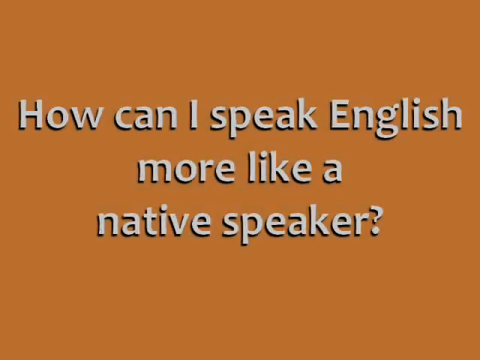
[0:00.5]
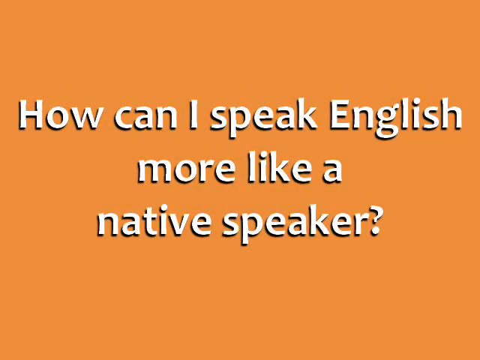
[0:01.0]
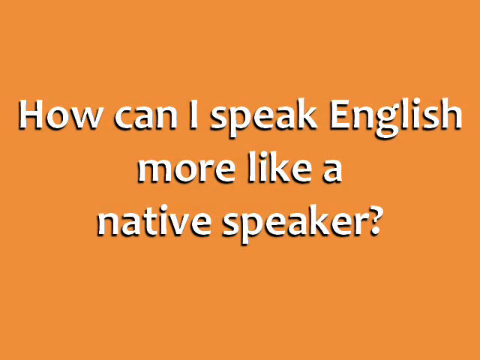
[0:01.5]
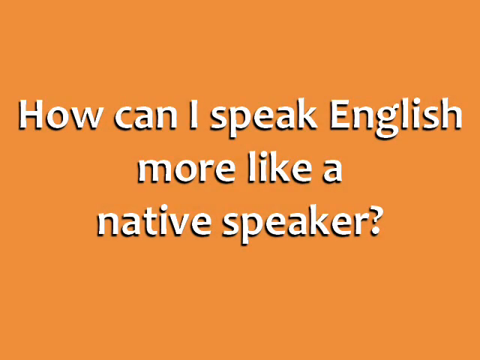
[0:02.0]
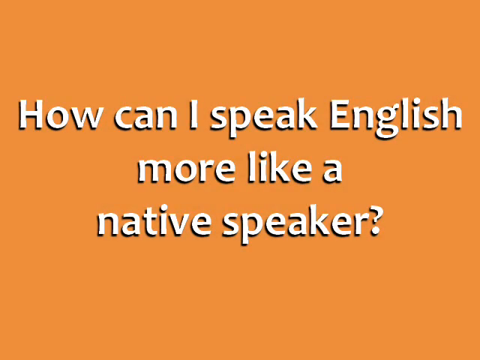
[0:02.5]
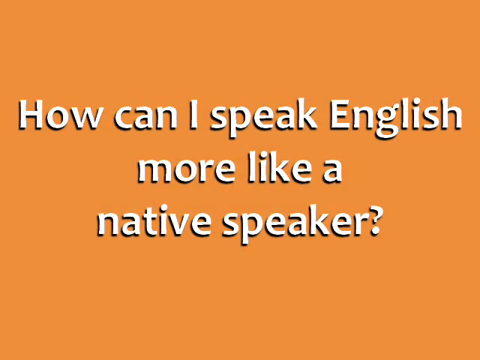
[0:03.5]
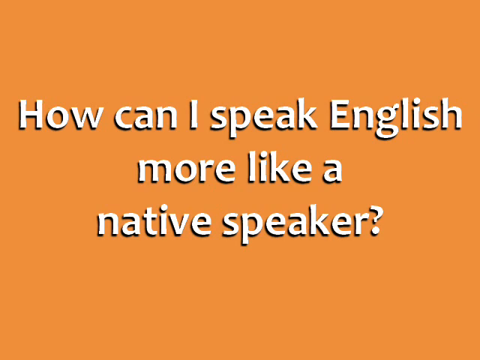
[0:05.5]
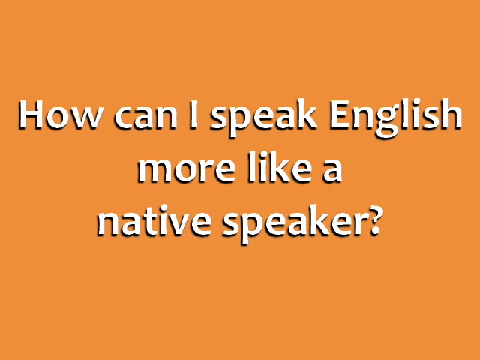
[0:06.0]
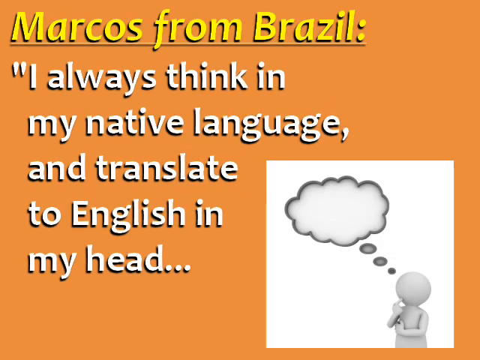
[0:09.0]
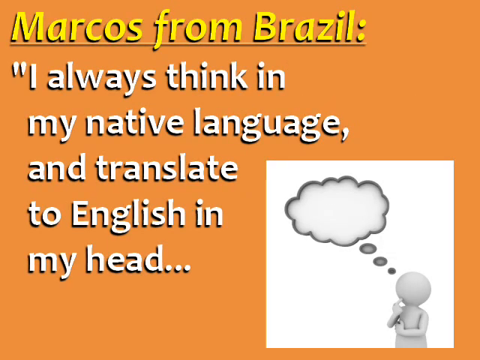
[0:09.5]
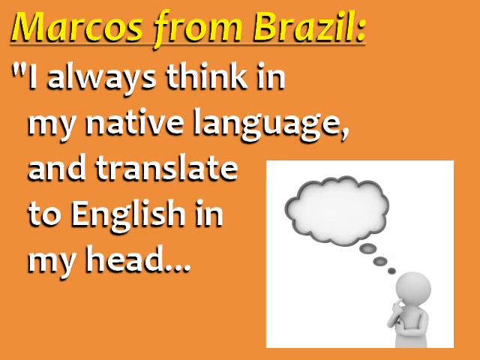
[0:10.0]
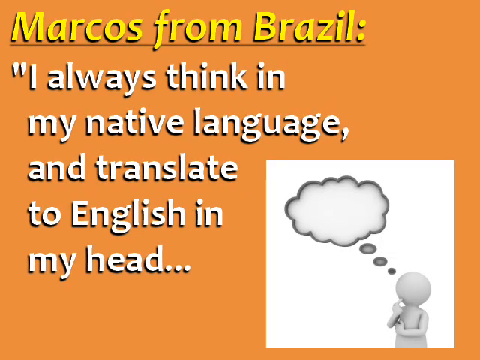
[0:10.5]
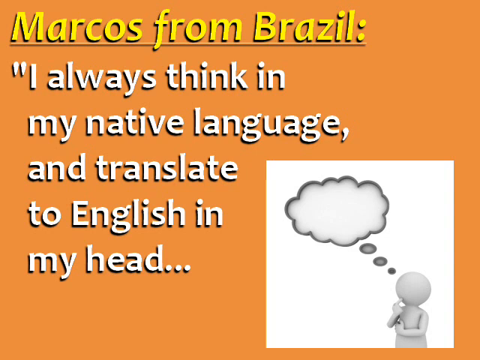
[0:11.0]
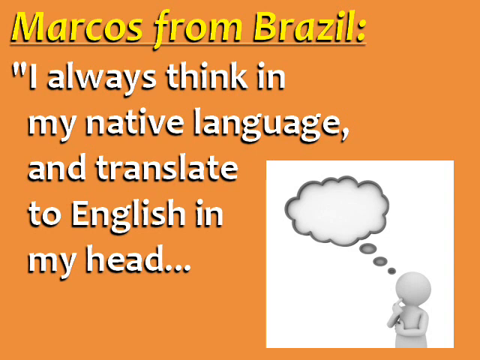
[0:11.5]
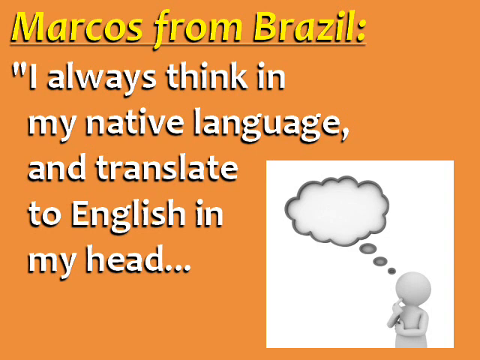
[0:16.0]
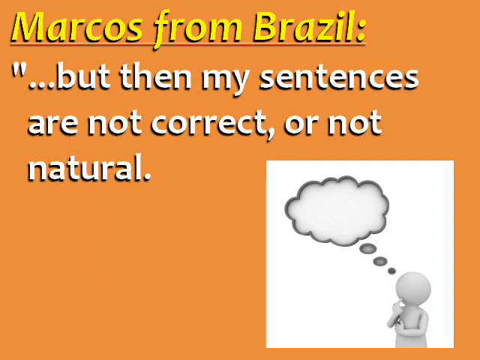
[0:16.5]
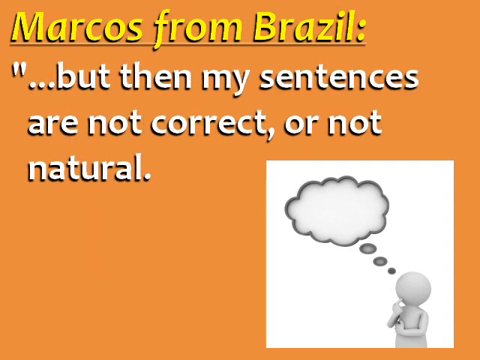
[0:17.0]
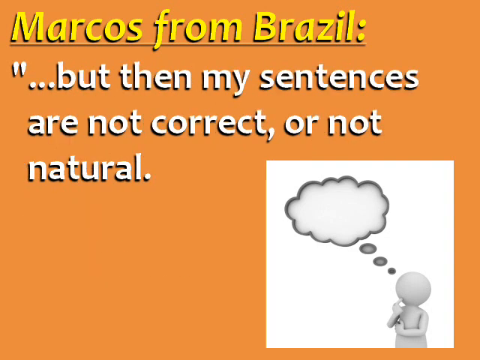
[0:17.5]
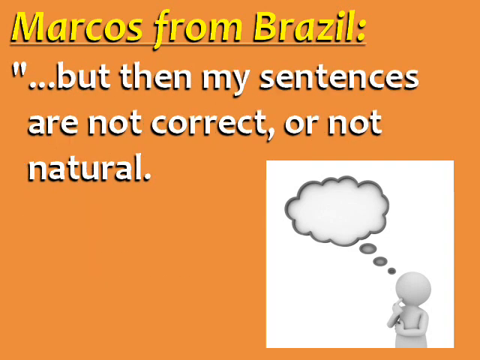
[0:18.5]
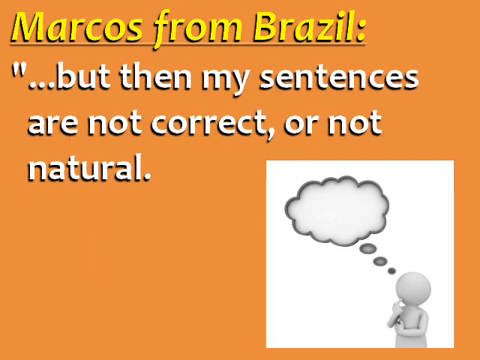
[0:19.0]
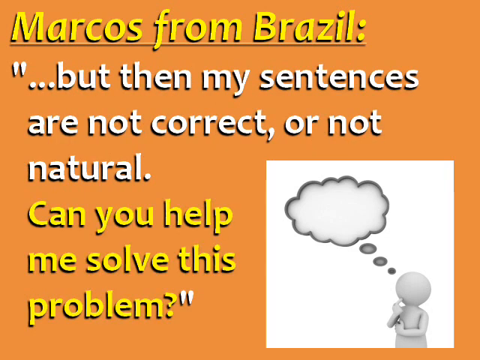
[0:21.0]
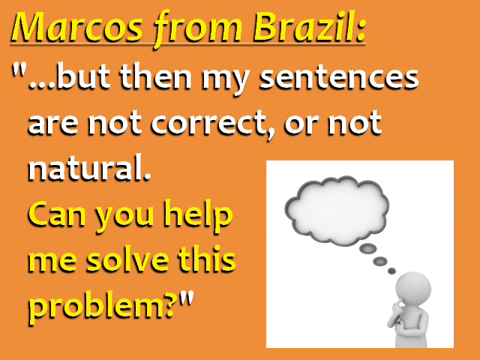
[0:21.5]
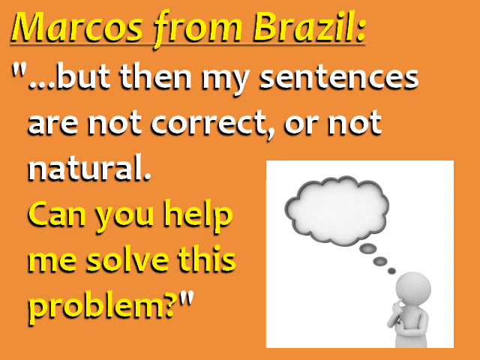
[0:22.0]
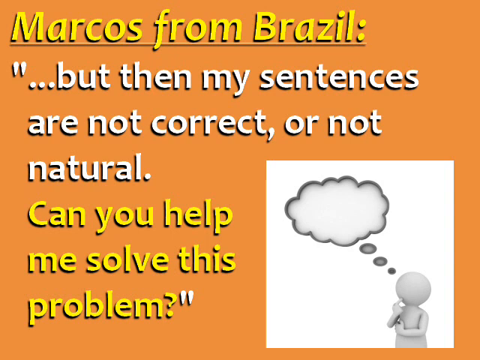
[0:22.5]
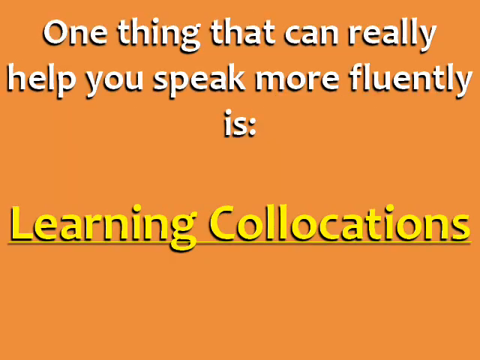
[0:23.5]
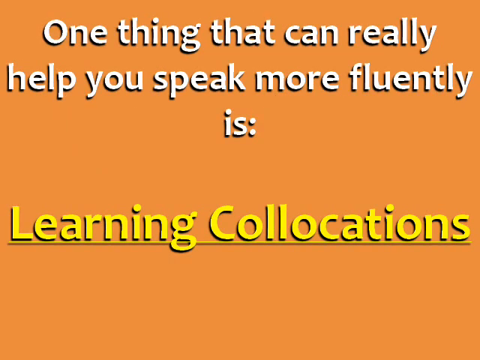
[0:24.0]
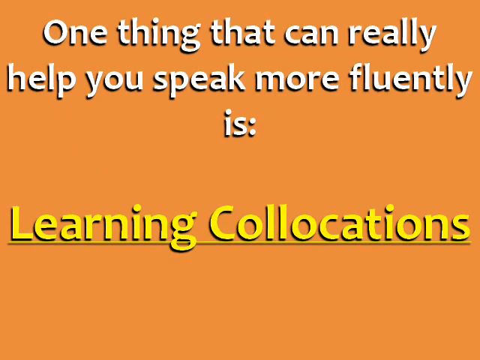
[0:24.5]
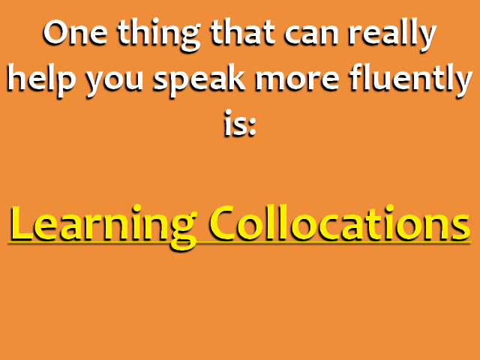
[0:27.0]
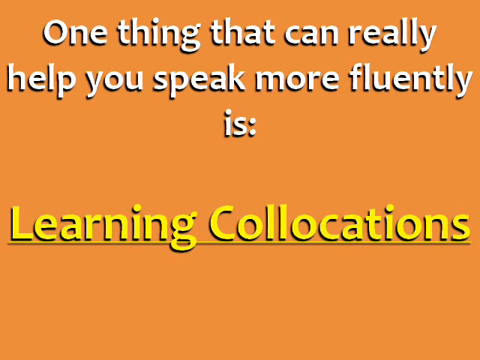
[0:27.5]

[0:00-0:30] Information appears on screen: a message from someone from Brazil who says they always think in their native language and translate to English in their head, but their sentences are not correct or not natural, and asks for help solving the issue. The response says that one thing that can really help you speak more fluently is learning collocations.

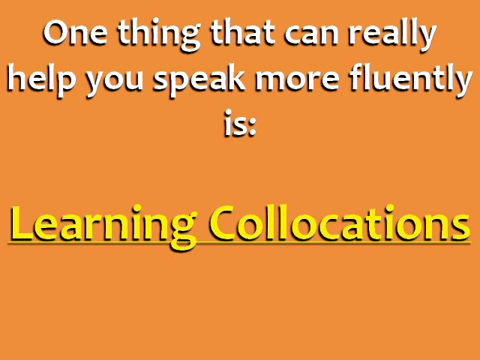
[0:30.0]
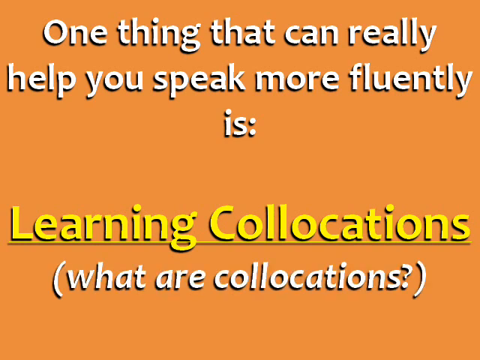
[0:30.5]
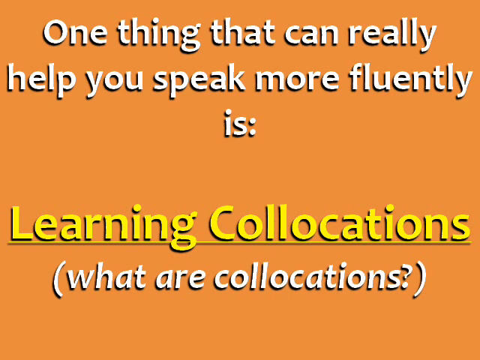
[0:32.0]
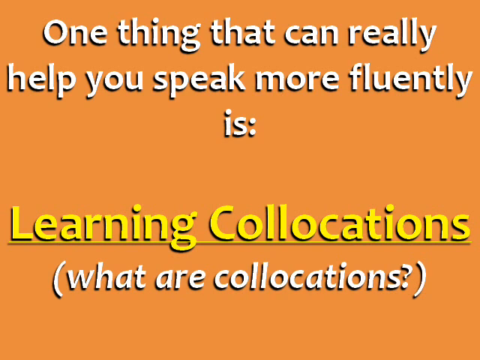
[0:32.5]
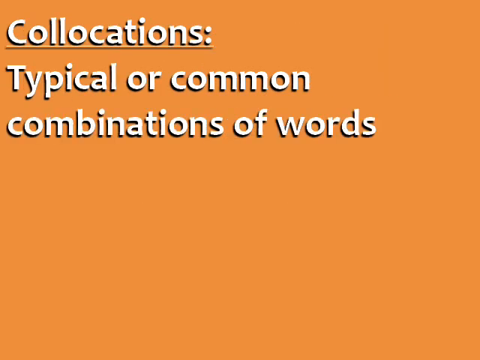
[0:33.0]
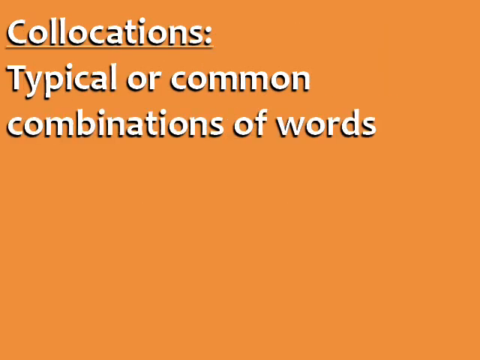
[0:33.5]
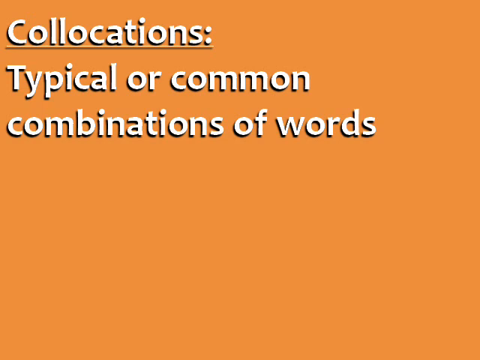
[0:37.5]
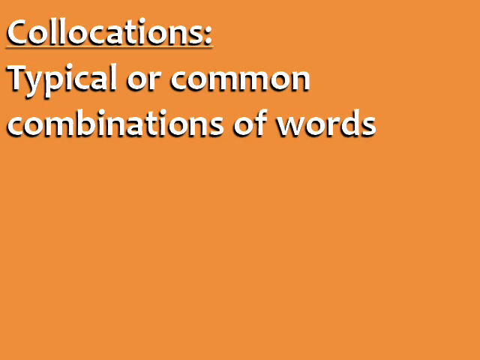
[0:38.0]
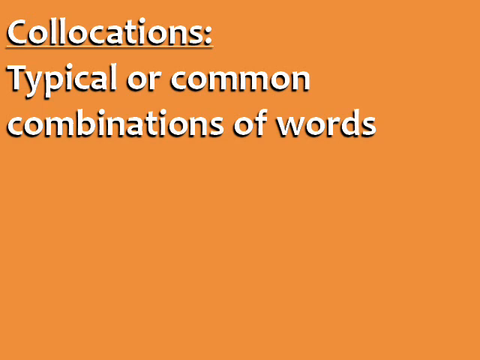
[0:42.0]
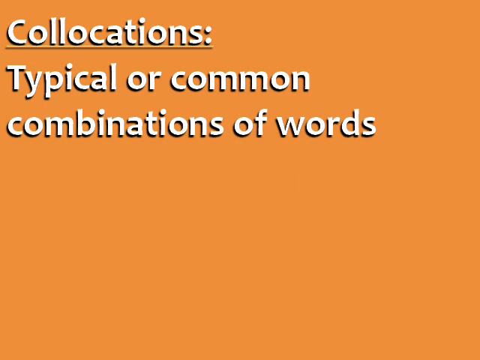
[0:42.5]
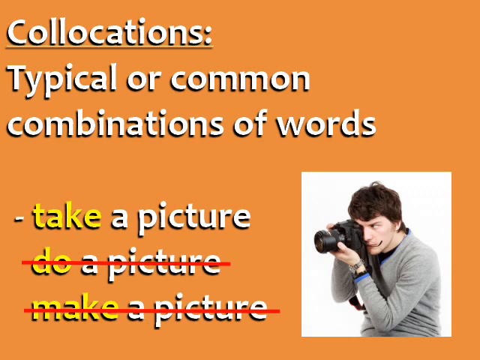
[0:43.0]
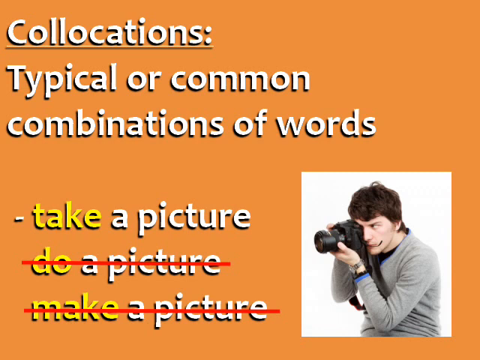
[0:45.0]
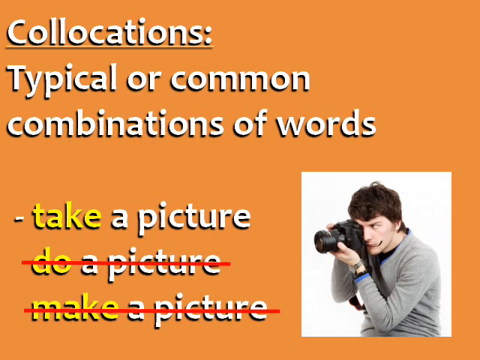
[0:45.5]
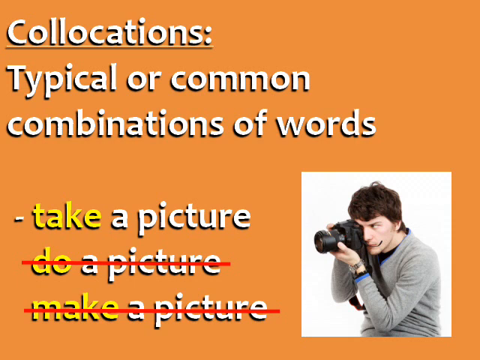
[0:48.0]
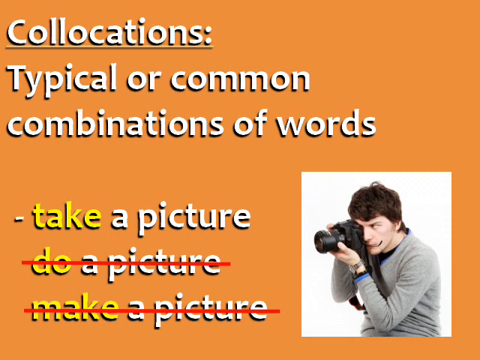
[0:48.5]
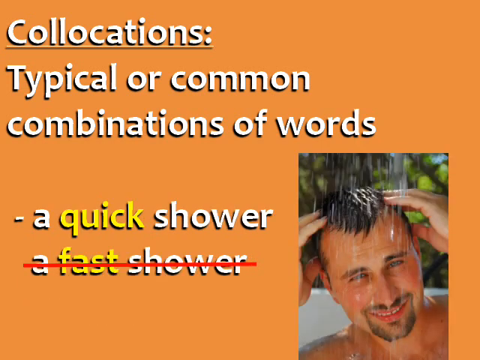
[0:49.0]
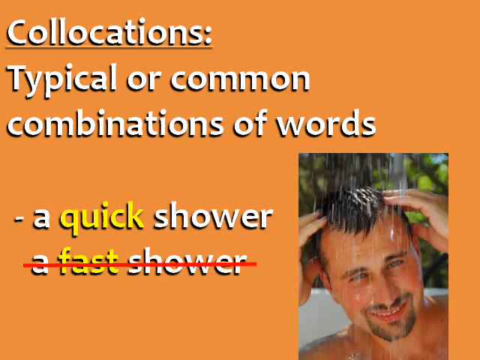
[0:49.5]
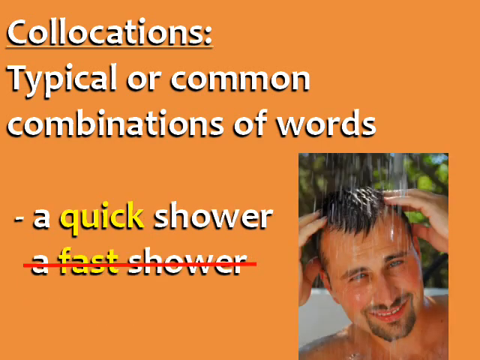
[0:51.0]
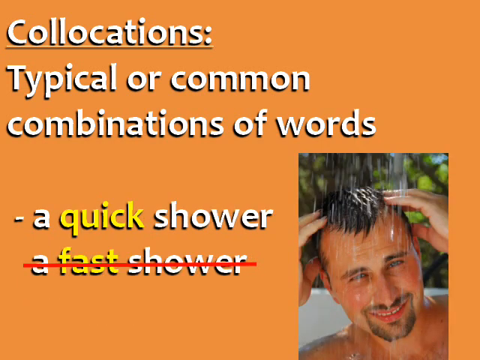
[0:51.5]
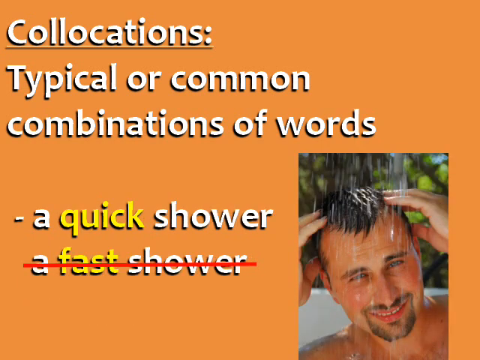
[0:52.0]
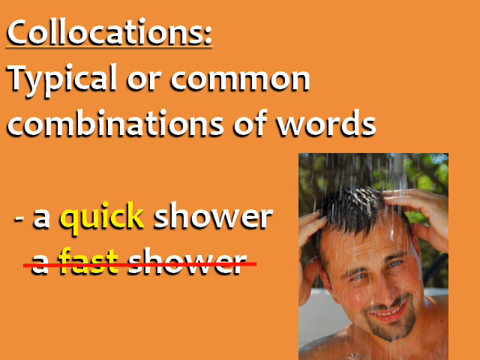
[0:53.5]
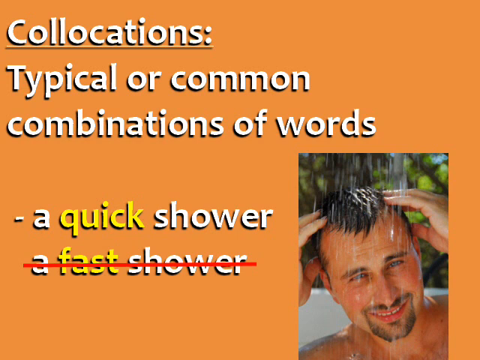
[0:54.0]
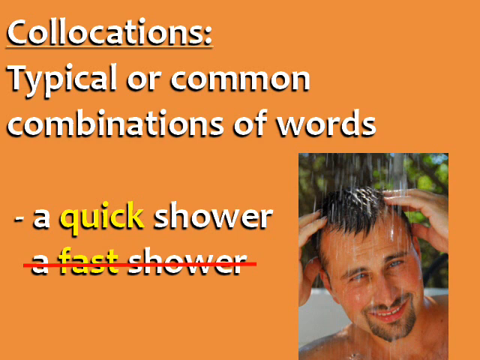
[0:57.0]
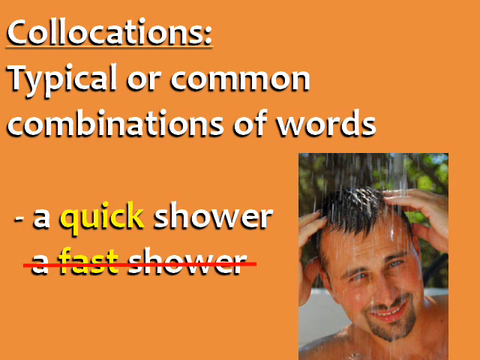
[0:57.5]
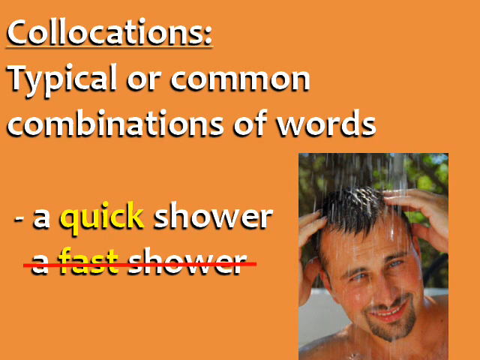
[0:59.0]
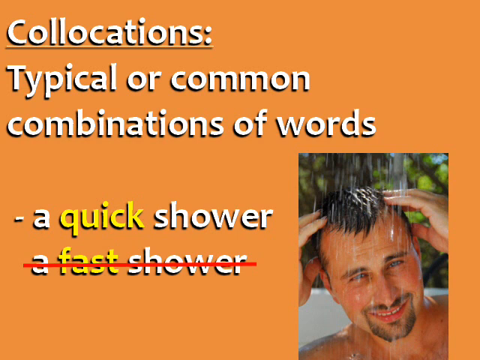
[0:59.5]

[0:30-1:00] The information continues: learning collocations can help, and collocations are defined as typical or common combinations of words. Examples follow: take a picture, do a picture, make a picture, with take a picture as the correct one; and a quick shower, not a fast shower.